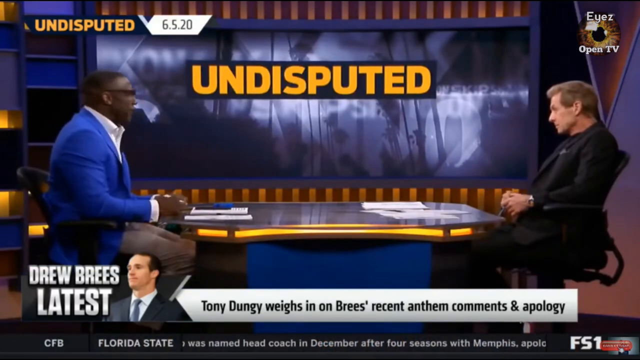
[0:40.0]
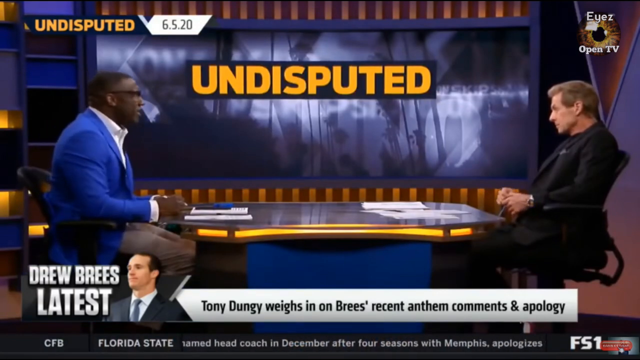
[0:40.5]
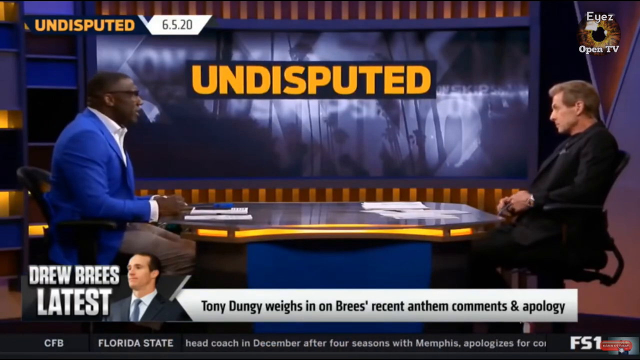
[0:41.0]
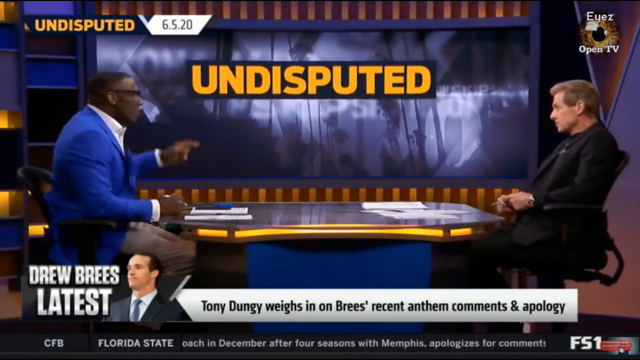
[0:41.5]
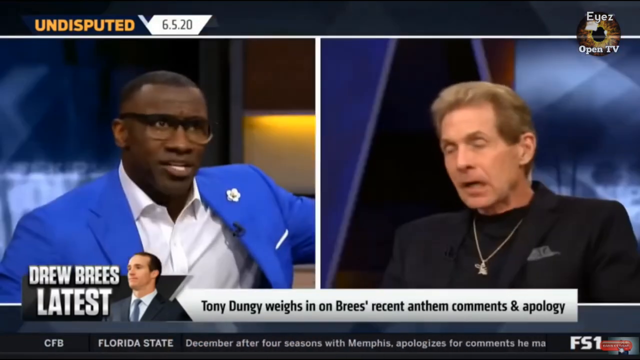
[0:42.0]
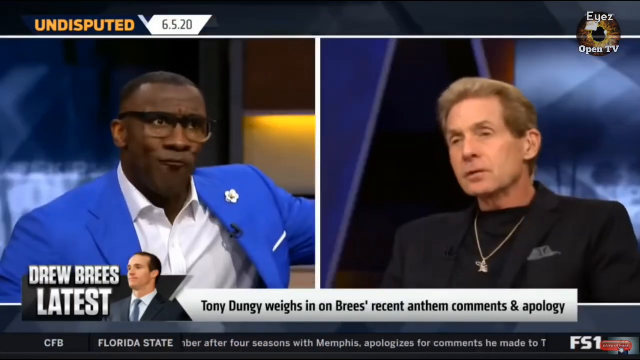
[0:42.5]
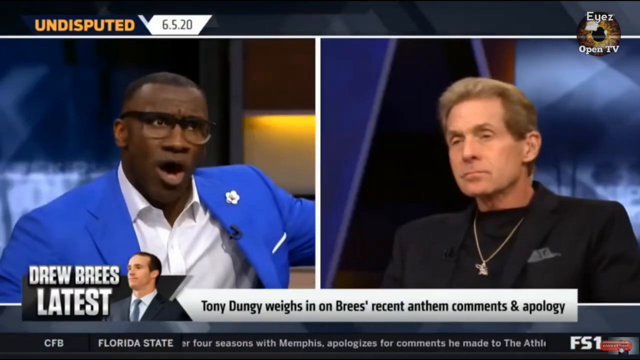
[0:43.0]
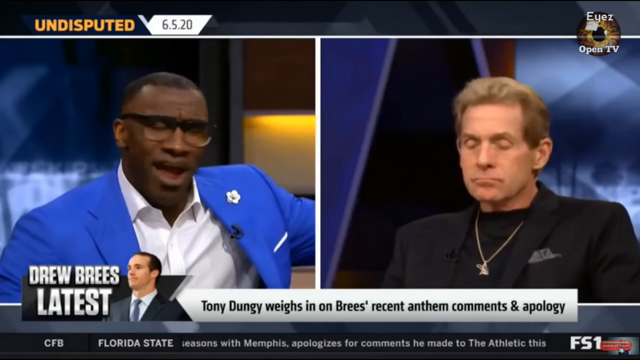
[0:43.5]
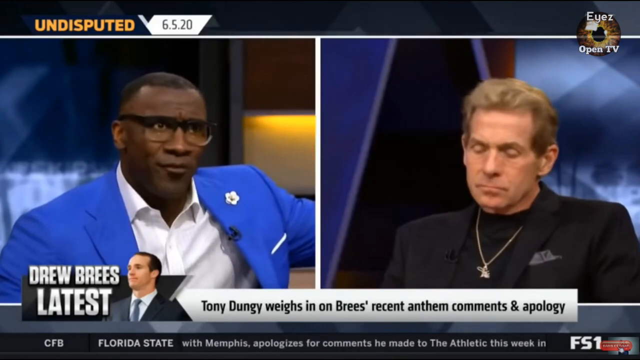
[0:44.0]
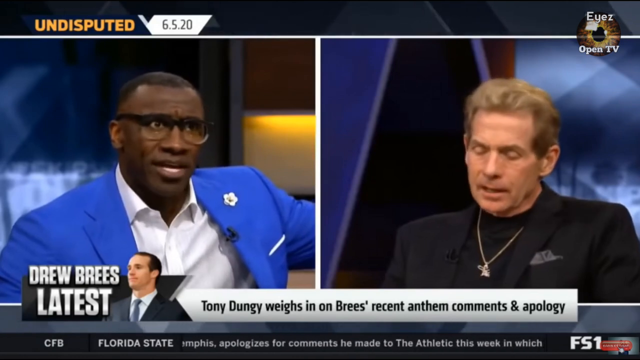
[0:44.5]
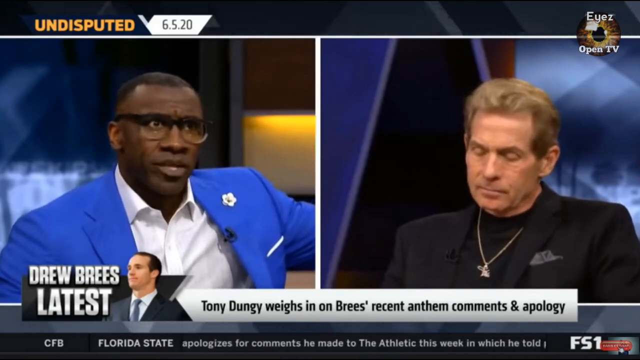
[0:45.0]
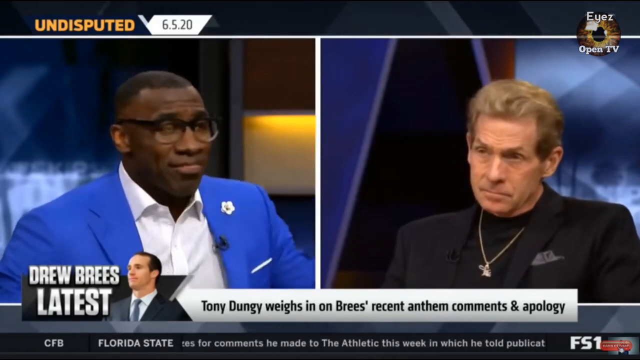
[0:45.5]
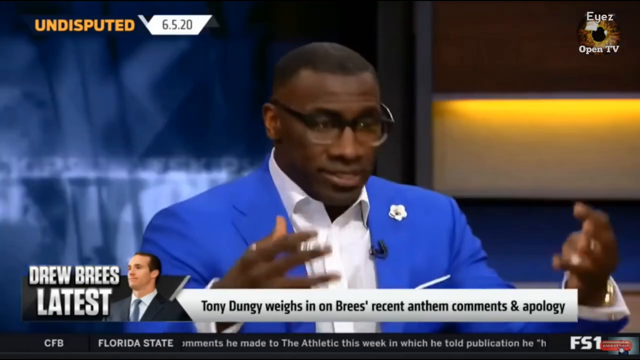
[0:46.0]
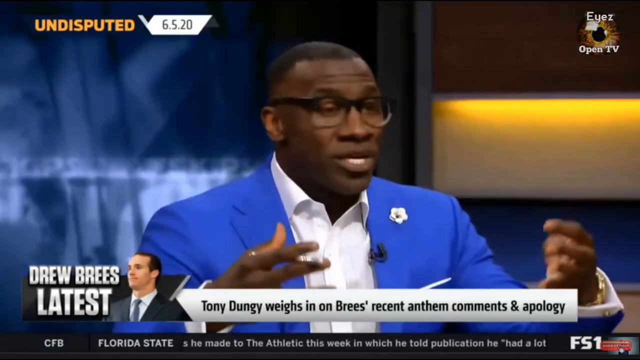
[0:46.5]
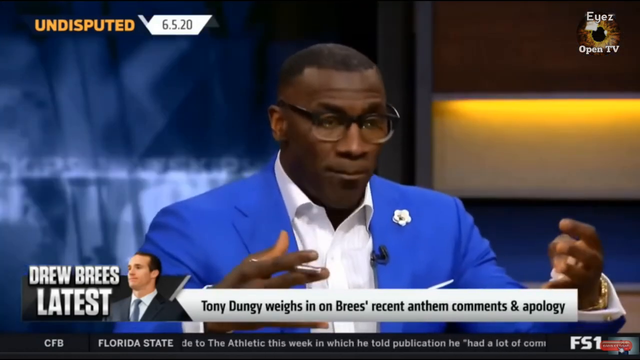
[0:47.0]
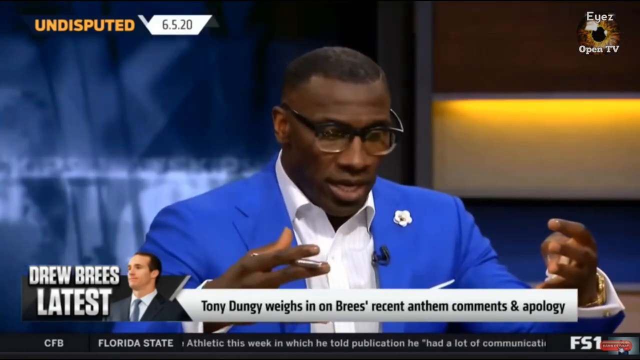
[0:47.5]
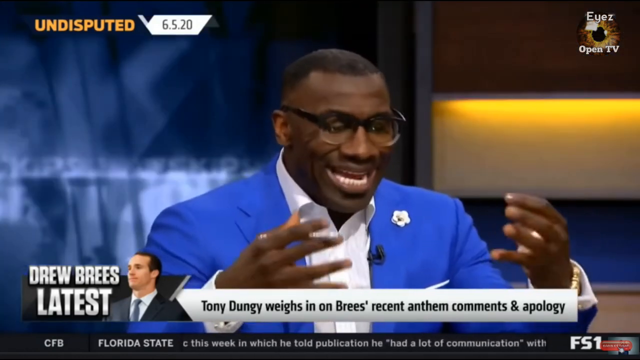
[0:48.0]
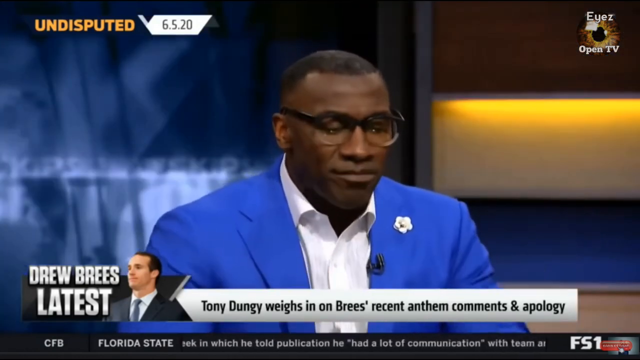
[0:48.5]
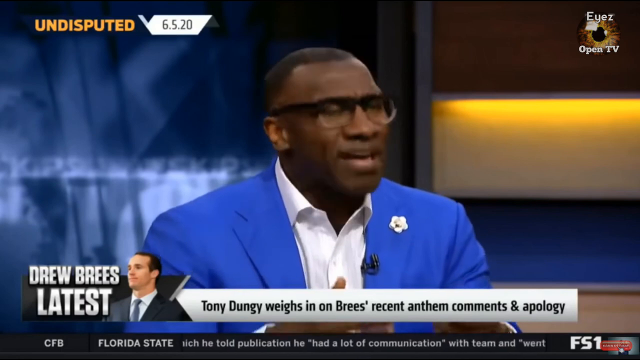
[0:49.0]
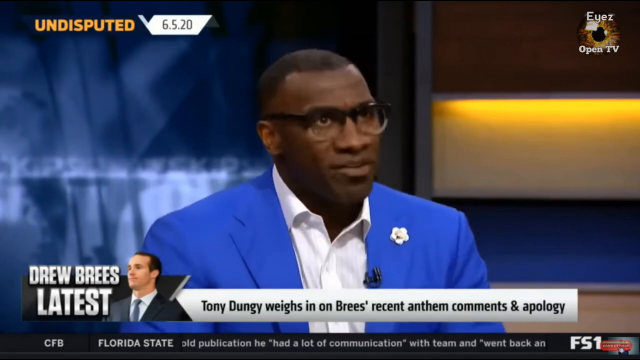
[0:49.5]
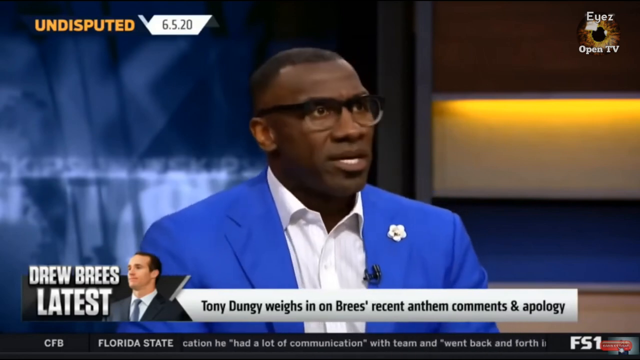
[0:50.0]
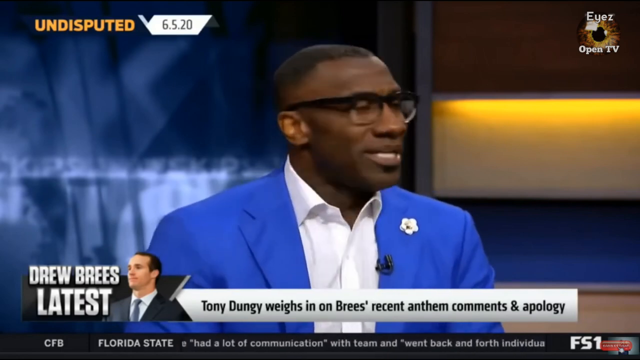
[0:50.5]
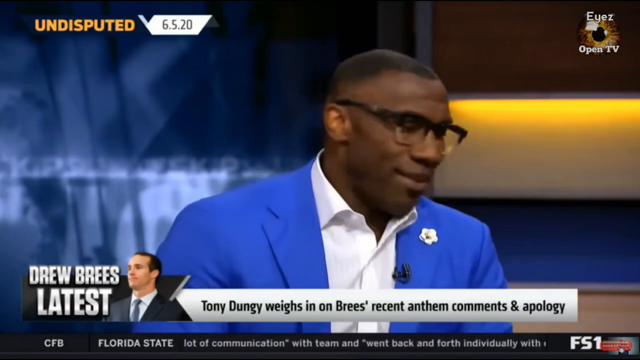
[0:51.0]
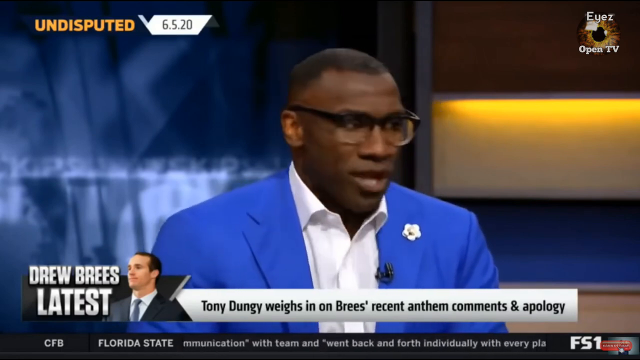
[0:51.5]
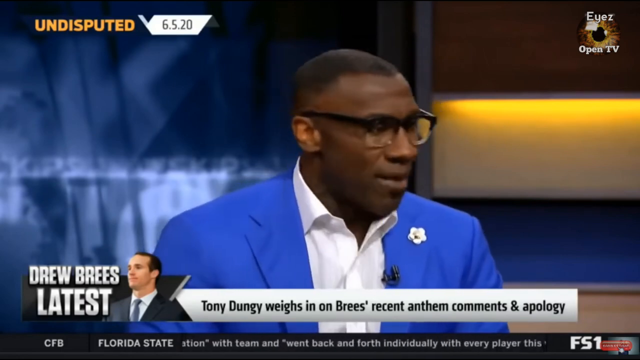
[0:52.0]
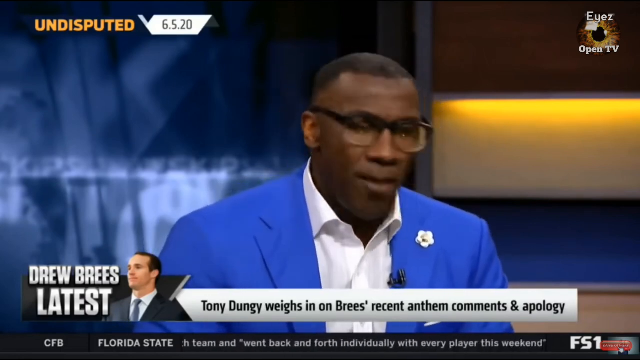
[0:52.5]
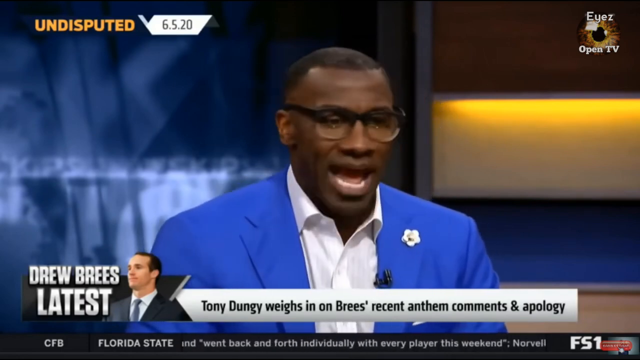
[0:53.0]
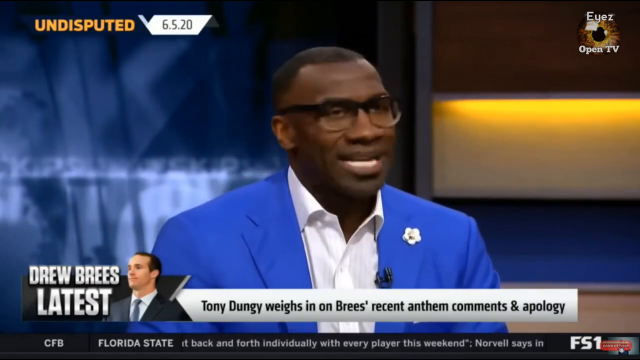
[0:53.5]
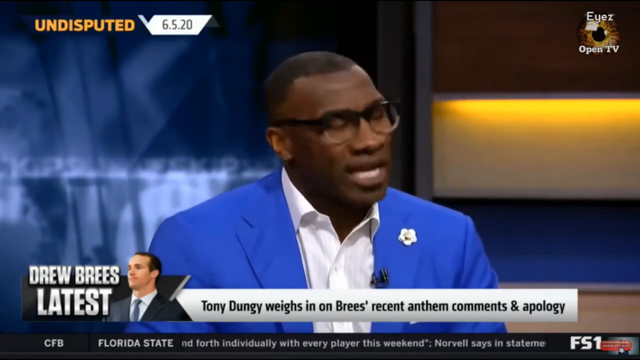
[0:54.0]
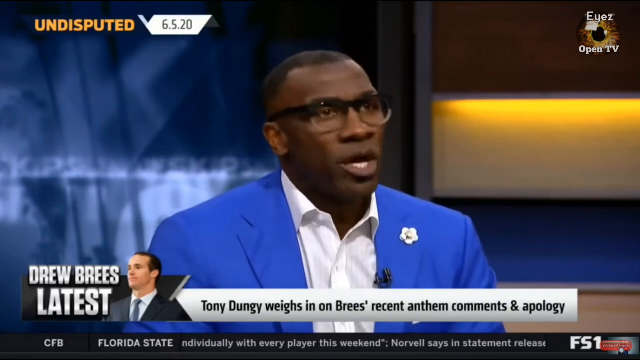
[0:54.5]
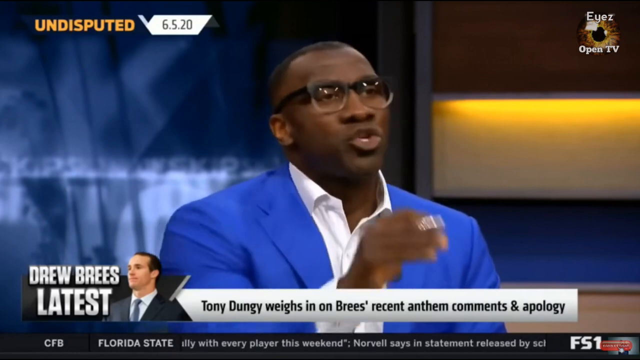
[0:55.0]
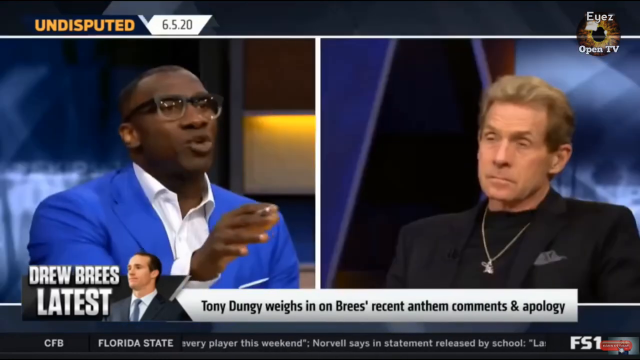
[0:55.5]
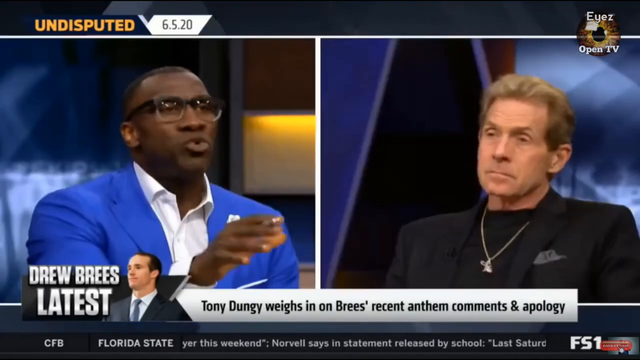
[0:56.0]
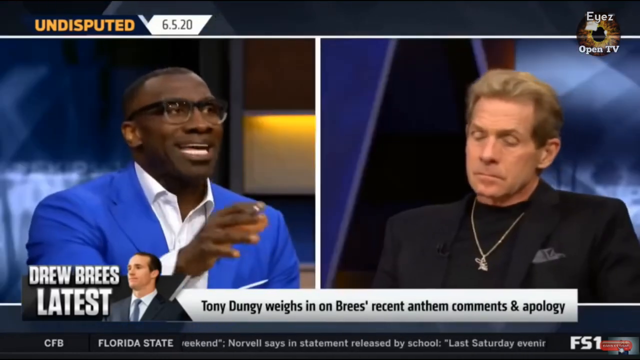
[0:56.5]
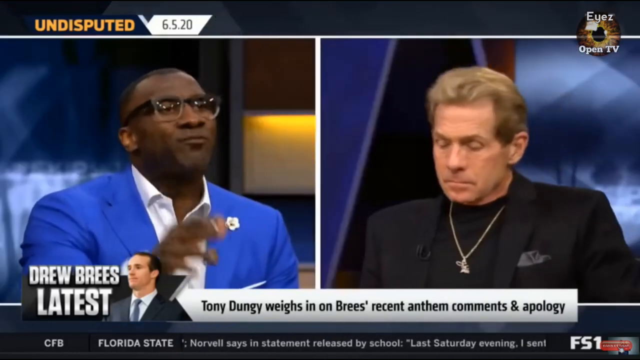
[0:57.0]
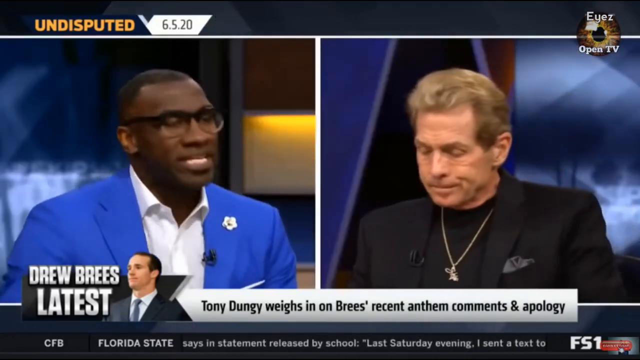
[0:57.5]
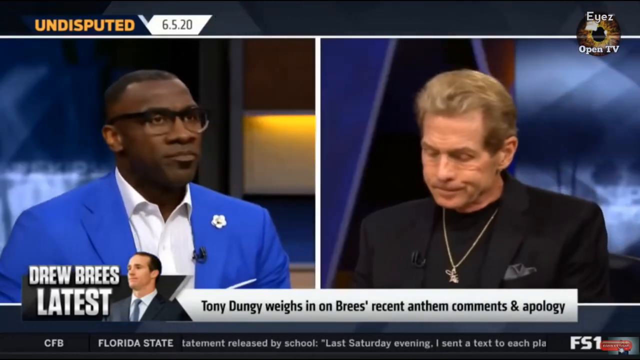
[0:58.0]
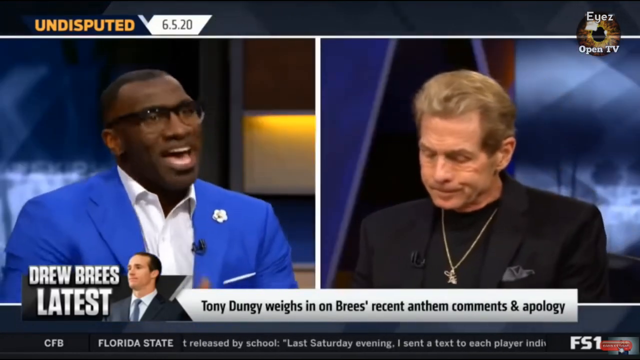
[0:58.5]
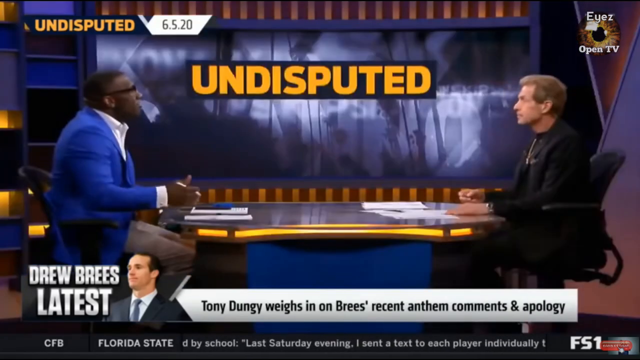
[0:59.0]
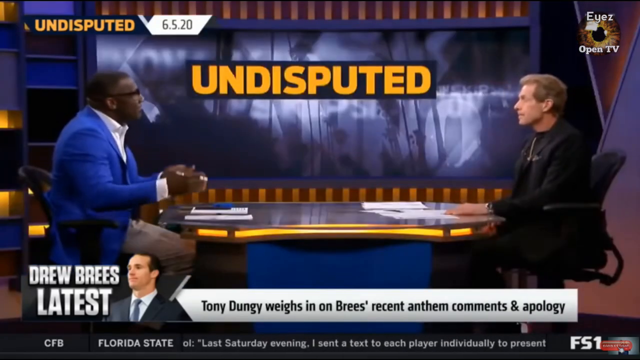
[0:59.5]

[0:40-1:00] In the upper left-hand corner, "undisputed" appears in orange, followed by "6.5.20" in black. In the upper right-hand corner is "EYEZ", followed by "Open TV". At the bottom, "Drew Brees latest" appears alongside "Tony Dungy weighs in on Brees' recent anthem comments and an apology", with the apostrophe after the S. The screen is split in half. On the left half is Shannon Sharp in a blue suit with a white flower pin on the left side of his suit and a microphone clipped on. The other man is white and wears a gold chain, a black suit and black underneath. The other man says perhaps one or two words, while Shannon Sharp does nearly all of the talking. As he talks, he does not look upset but seems to be trying to fully explain how he feels, using his hands as he does so.